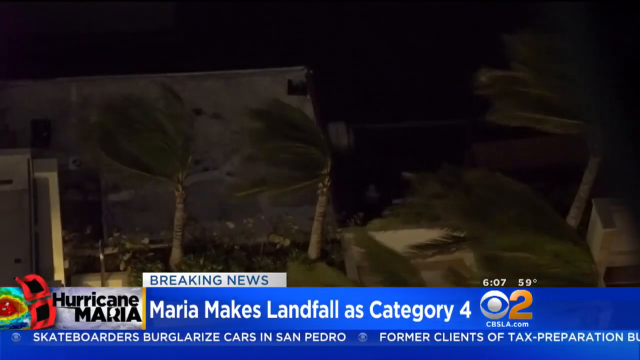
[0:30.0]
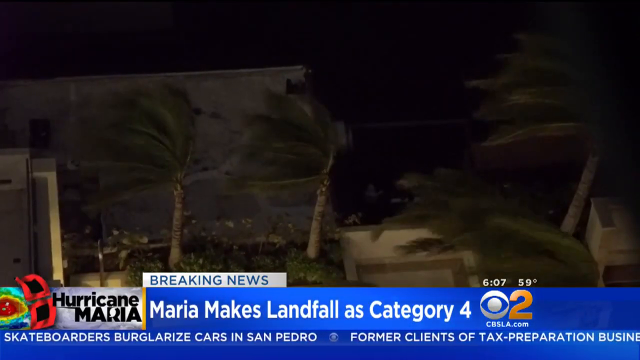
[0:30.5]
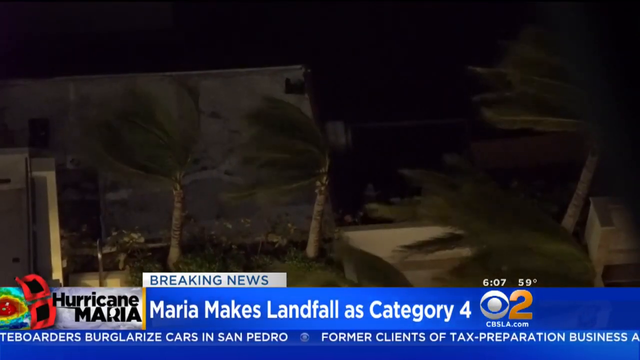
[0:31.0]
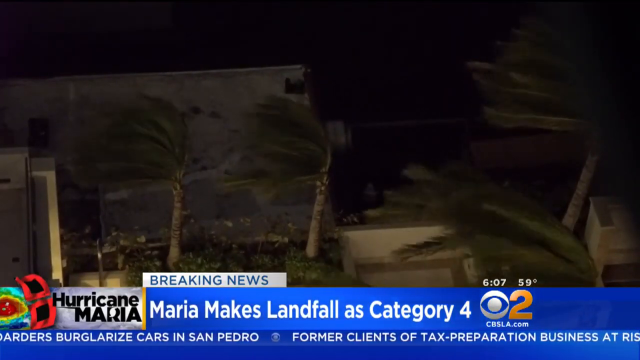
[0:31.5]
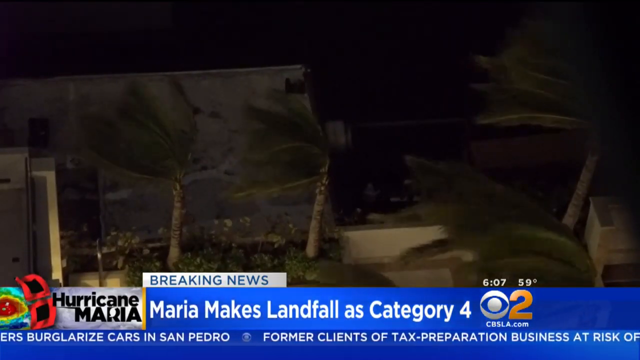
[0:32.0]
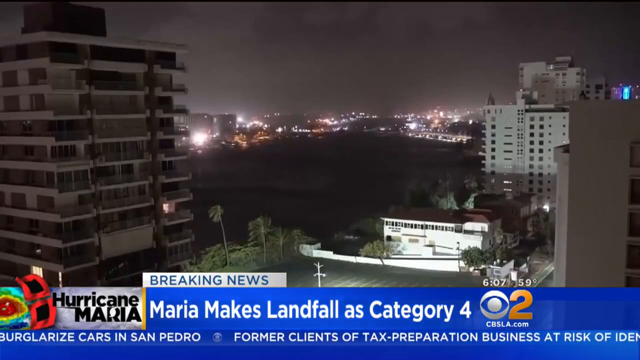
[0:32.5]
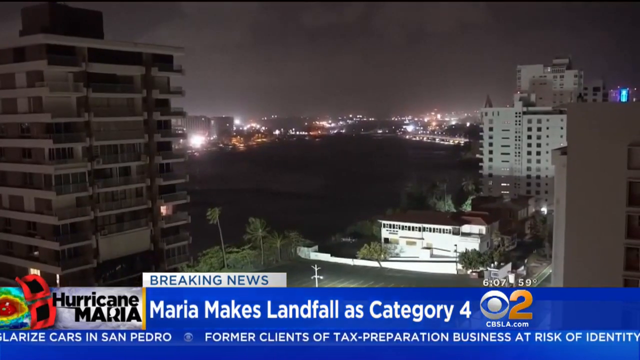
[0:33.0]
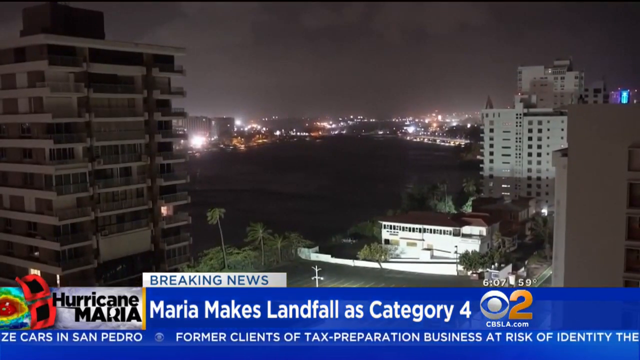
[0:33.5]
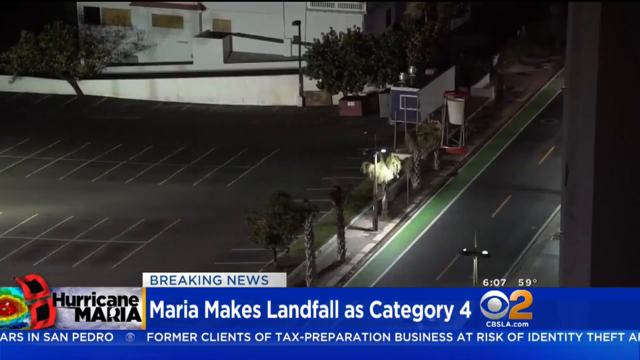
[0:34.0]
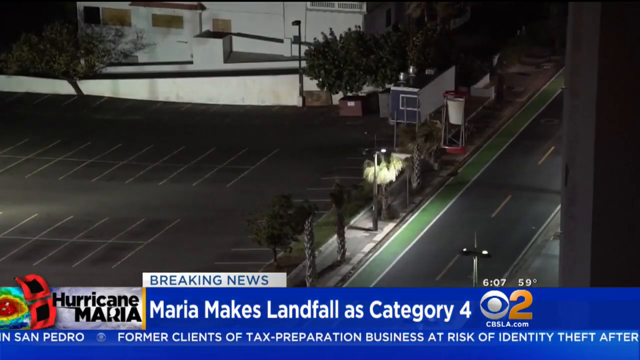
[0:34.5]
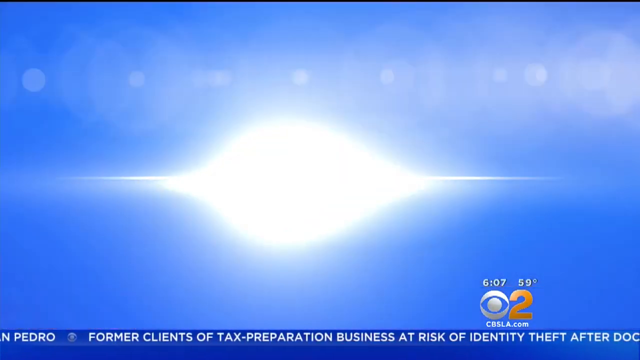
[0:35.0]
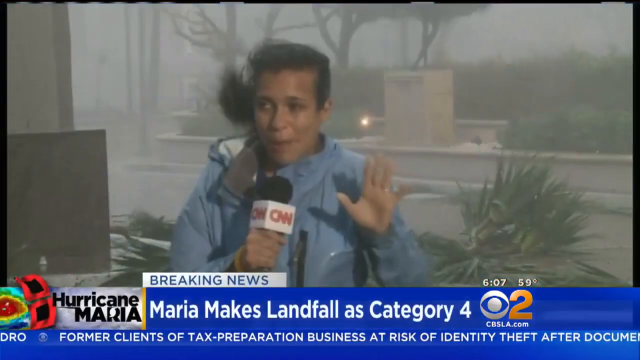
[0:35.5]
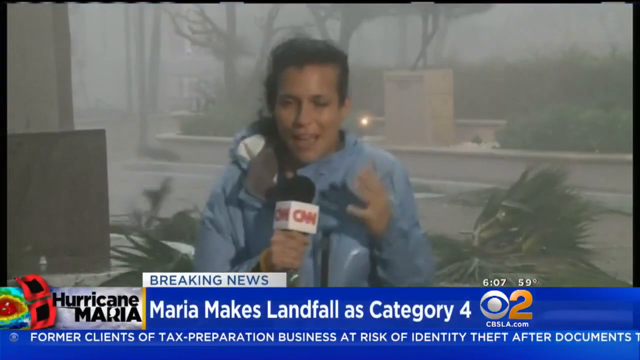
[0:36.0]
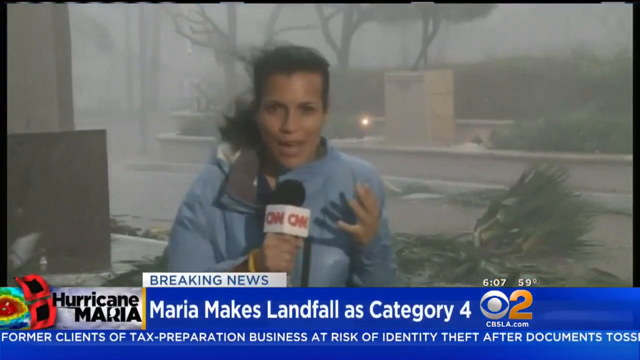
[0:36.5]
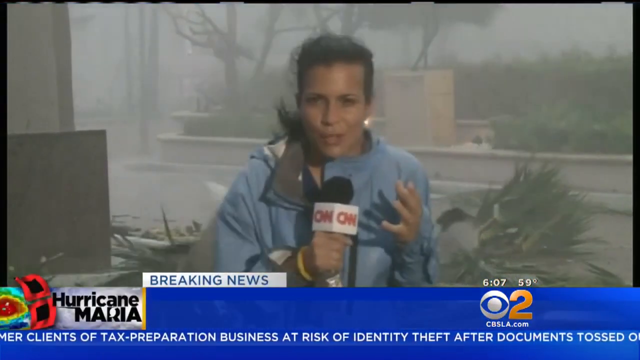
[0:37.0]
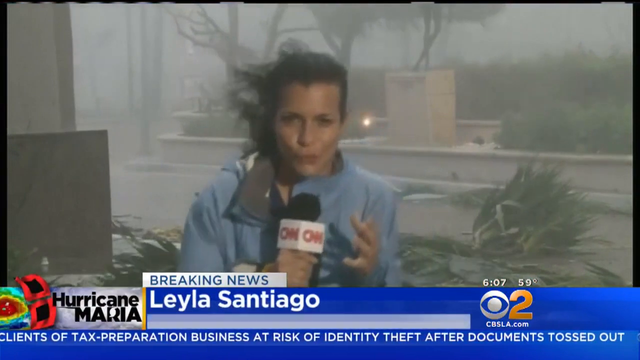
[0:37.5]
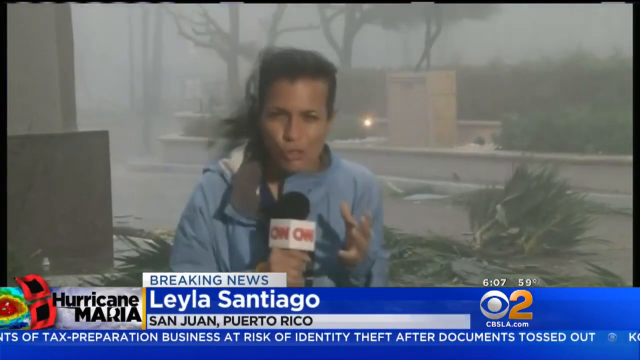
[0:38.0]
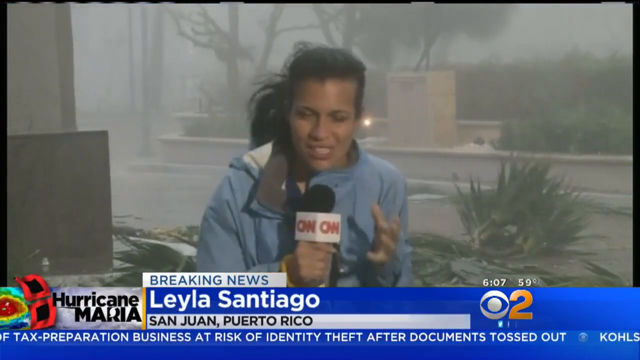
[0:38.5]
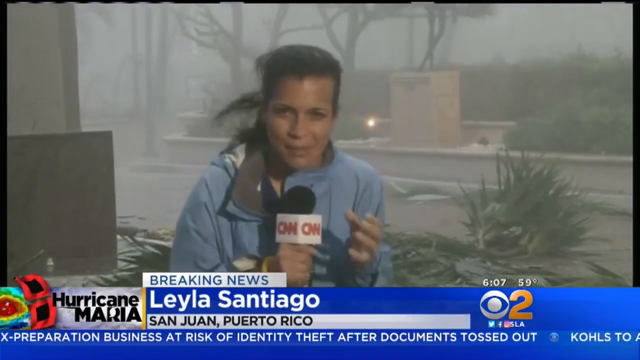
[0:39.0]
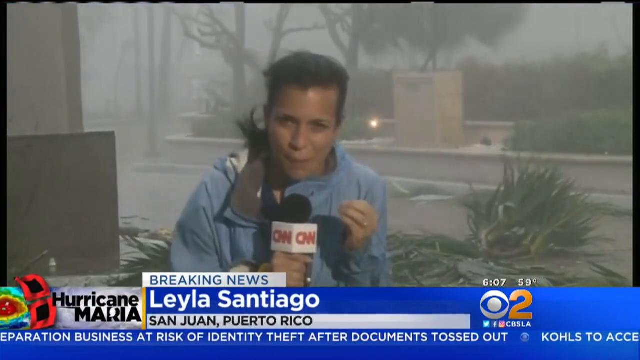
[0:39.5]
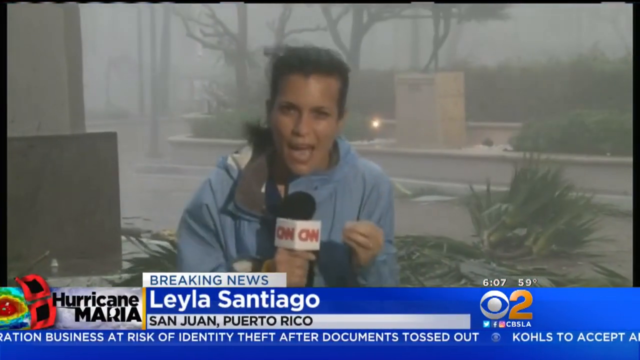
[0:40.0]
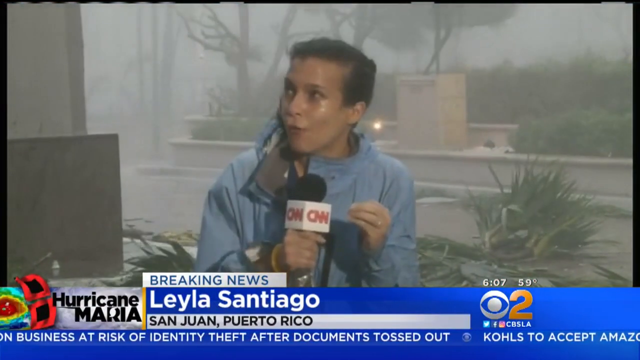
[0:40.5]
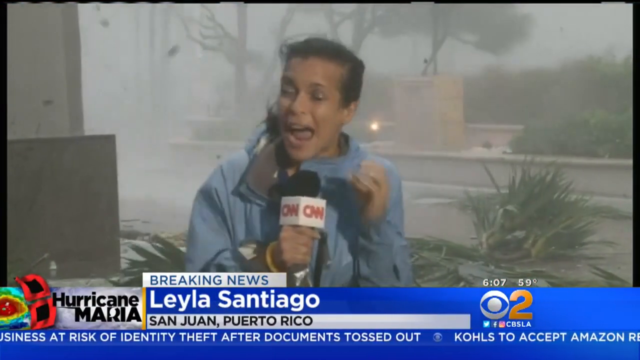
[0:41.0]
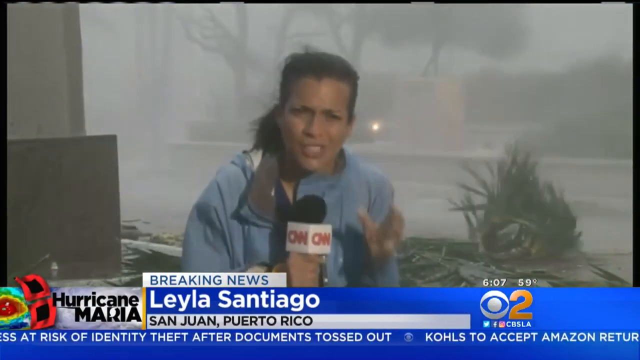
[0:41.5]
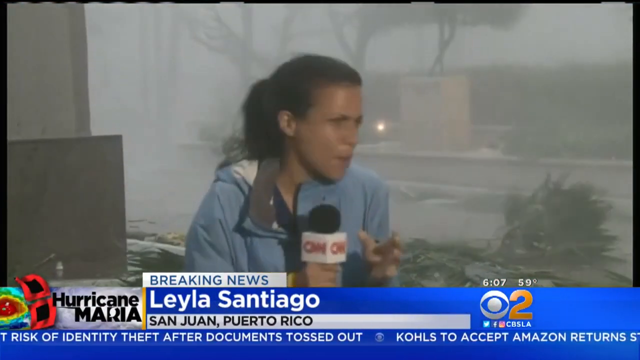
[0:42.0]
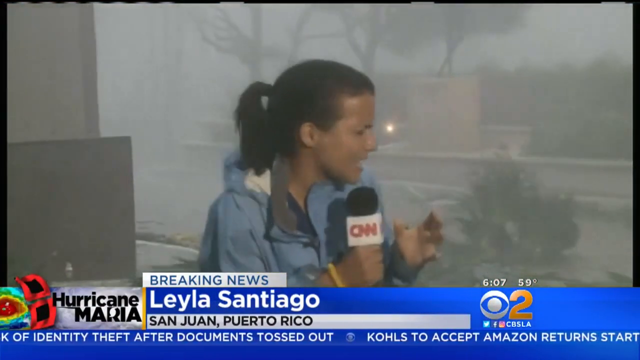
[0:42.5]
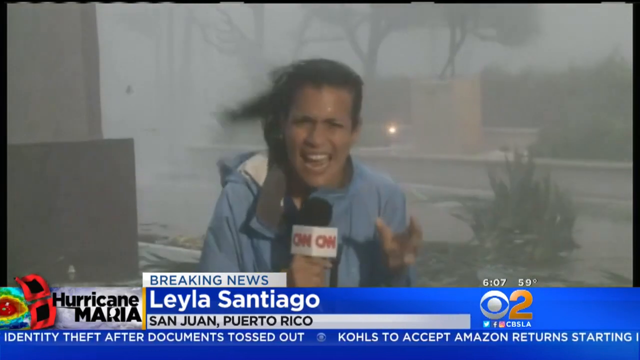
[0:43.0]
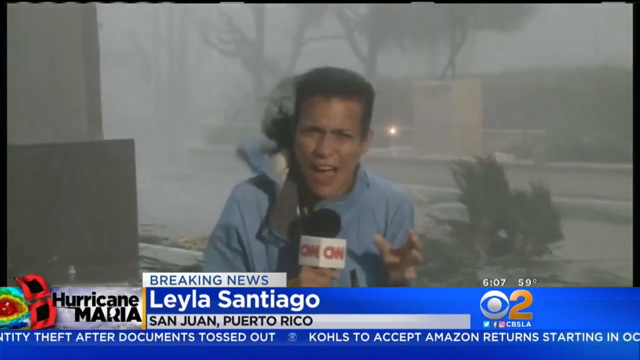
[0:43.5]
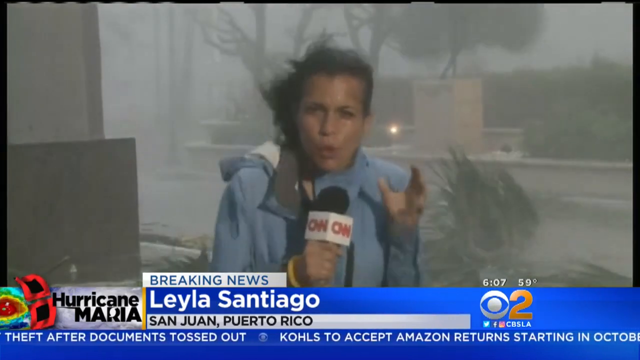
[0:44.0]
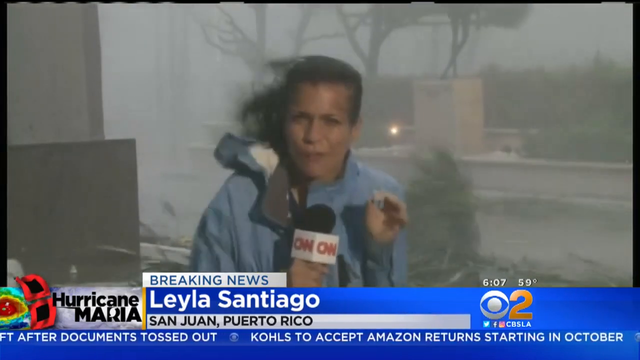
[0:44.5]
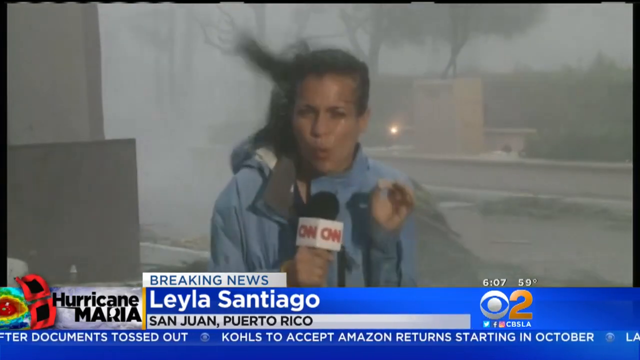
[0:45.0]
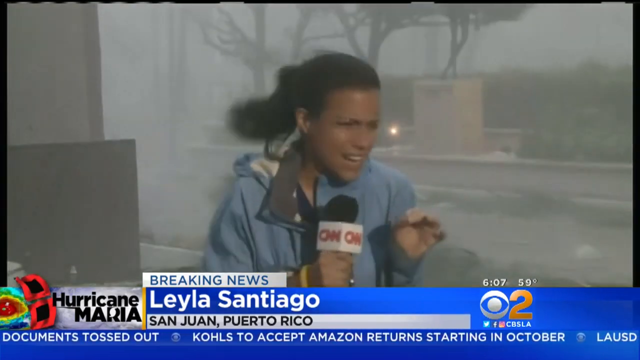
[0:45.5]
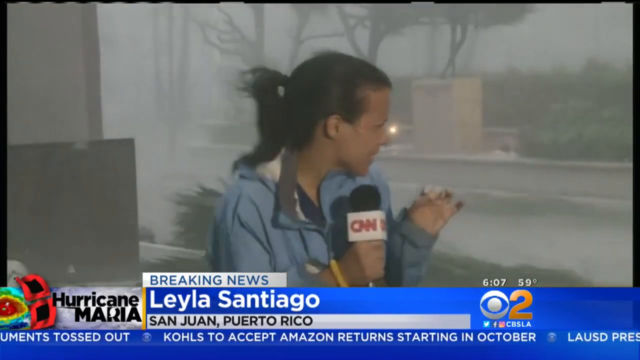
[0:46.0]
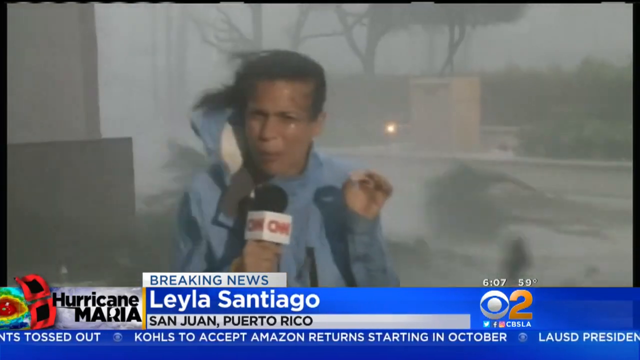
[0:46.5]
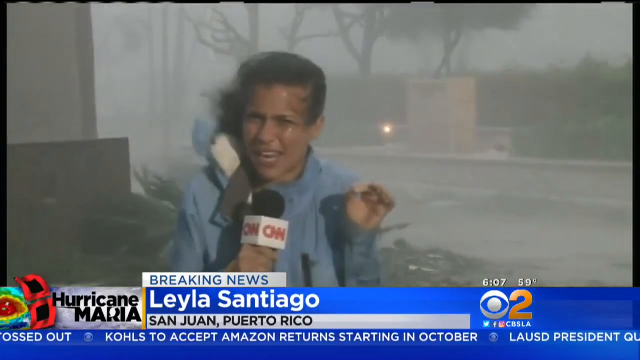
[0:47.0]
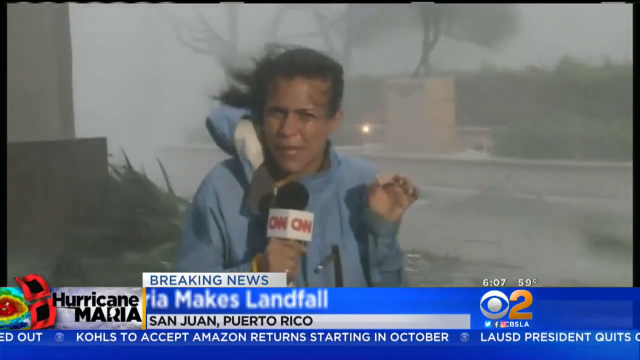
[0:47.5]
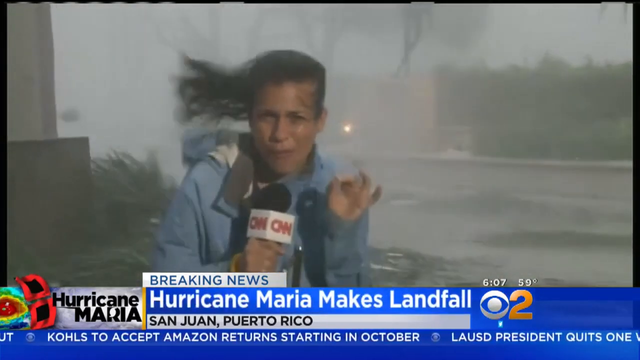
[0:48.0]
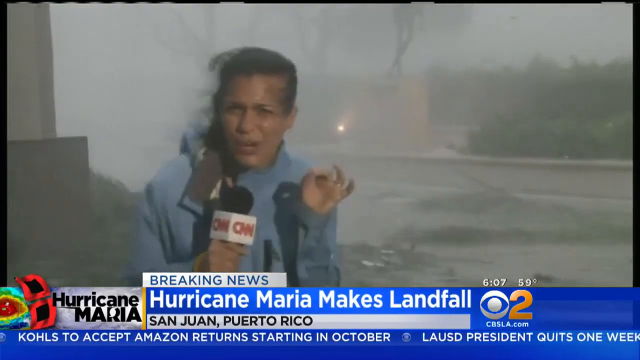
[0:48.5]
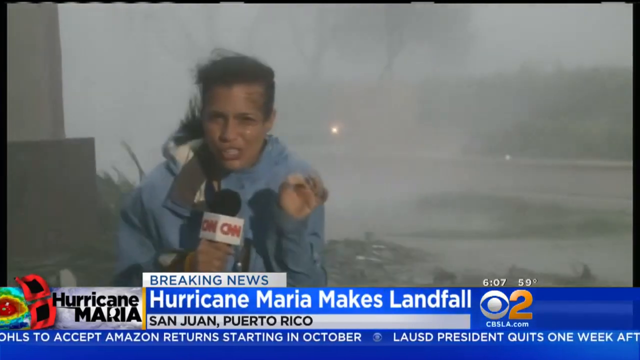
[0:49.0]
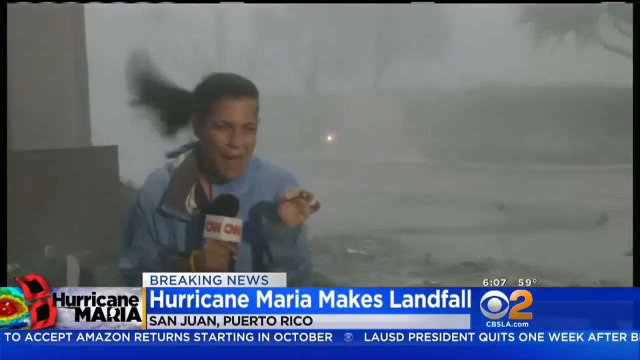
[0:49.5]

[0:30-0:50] The weather is very bad, with very strong wind and rain, and people are struggling and staggering as they try to go about their daily lives. The road is full of water, and everything seems to be flowing away with the rain and the wind.